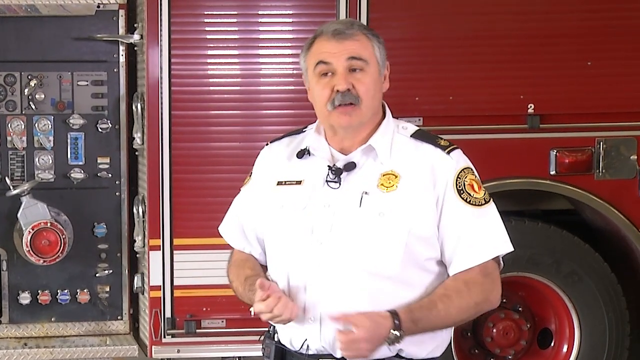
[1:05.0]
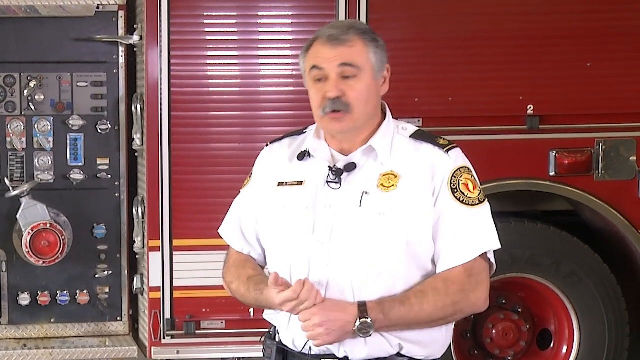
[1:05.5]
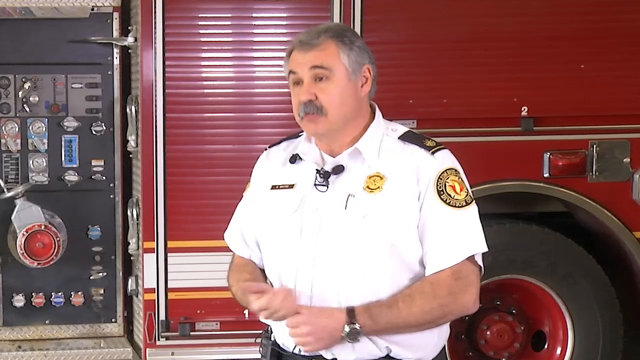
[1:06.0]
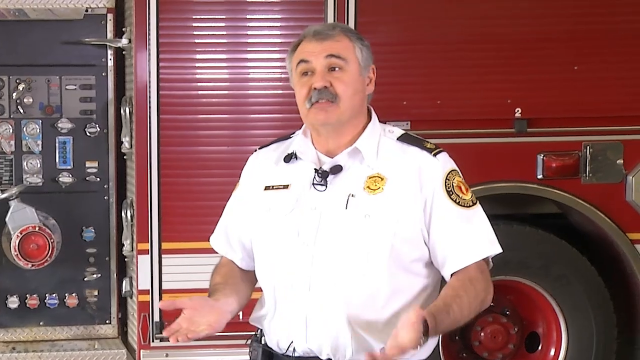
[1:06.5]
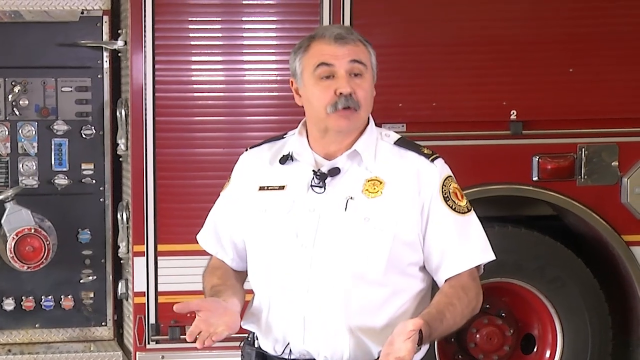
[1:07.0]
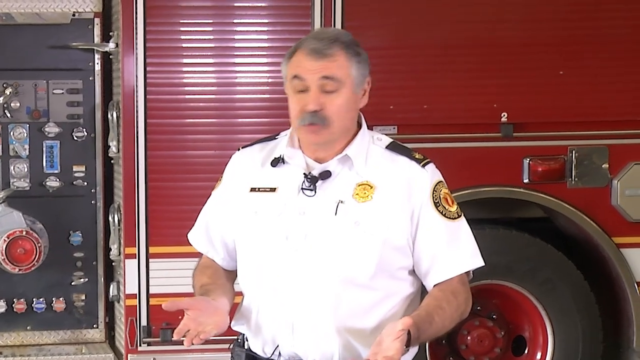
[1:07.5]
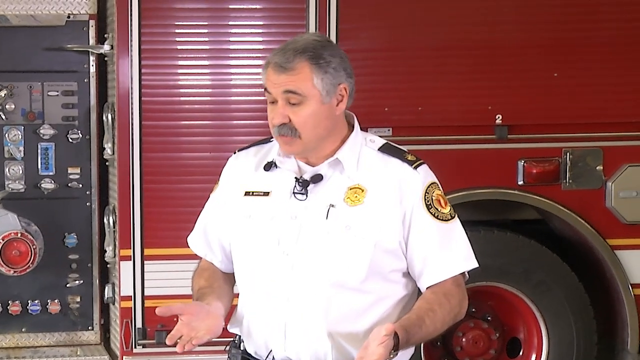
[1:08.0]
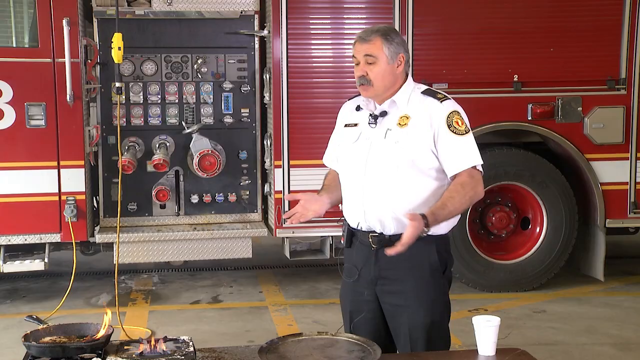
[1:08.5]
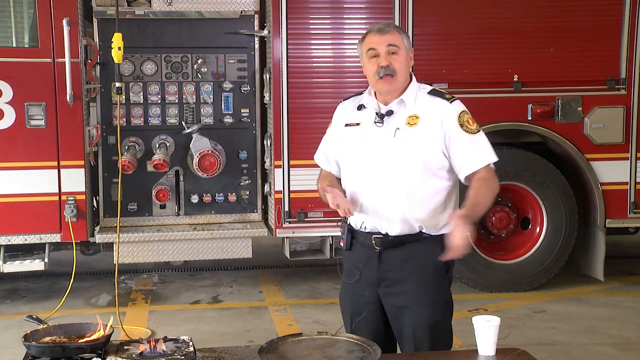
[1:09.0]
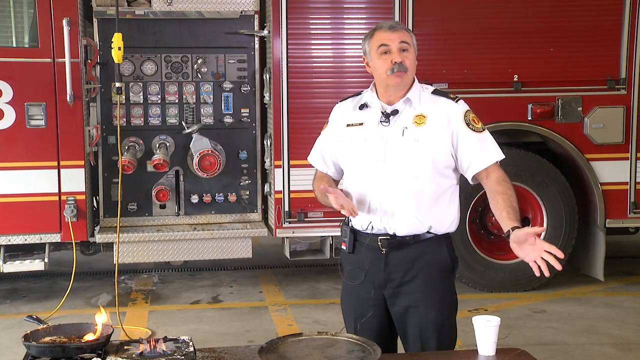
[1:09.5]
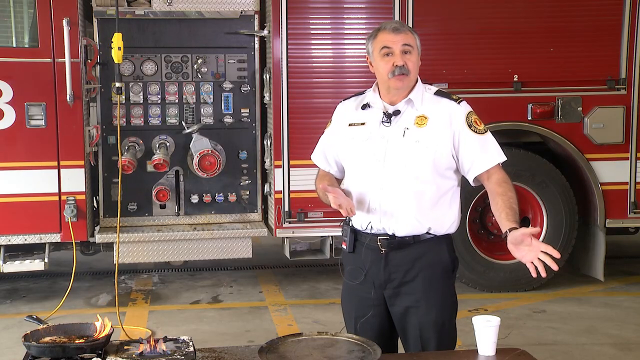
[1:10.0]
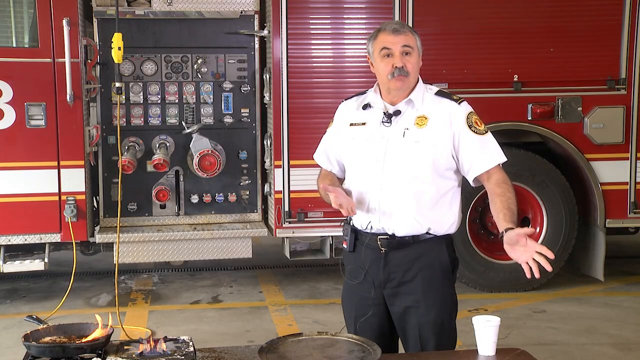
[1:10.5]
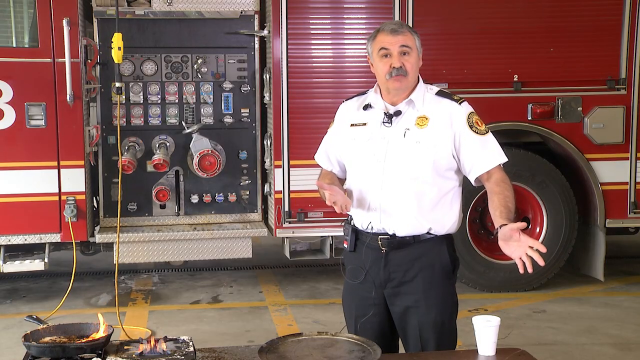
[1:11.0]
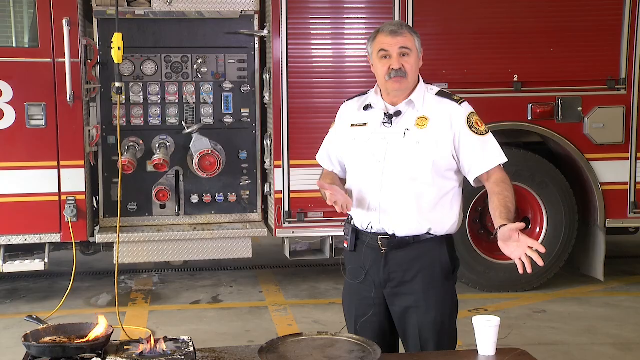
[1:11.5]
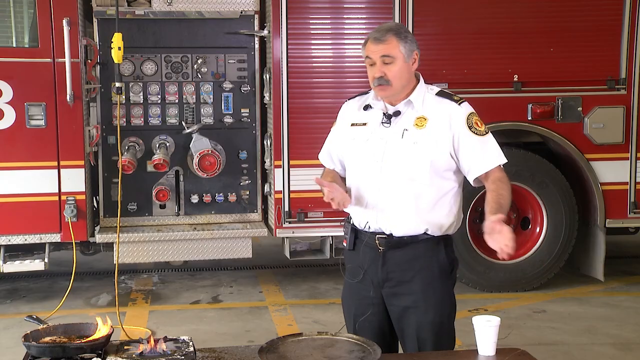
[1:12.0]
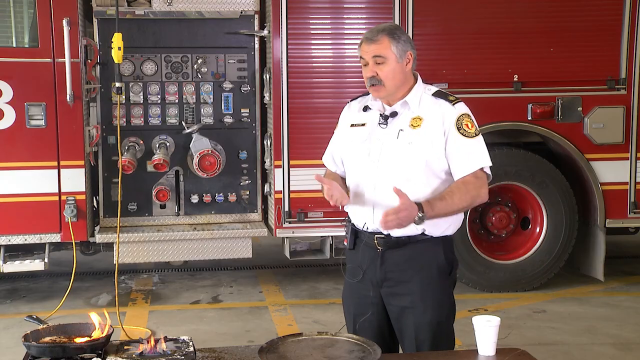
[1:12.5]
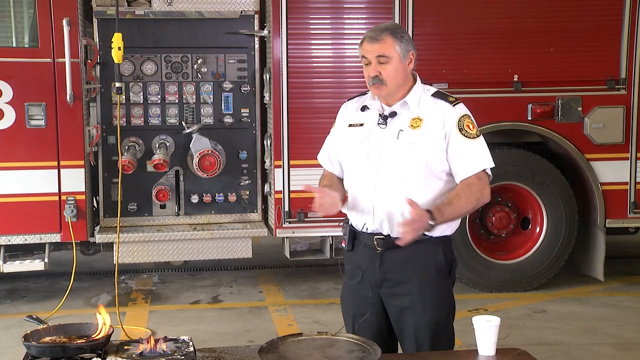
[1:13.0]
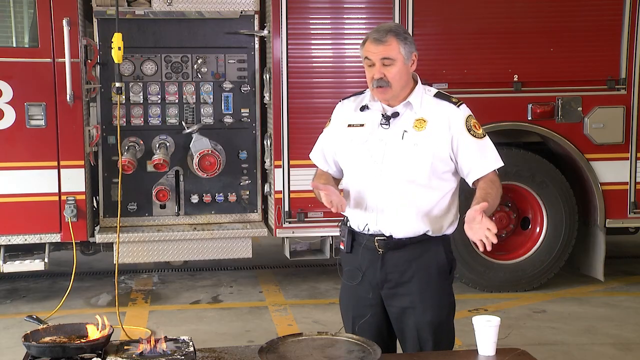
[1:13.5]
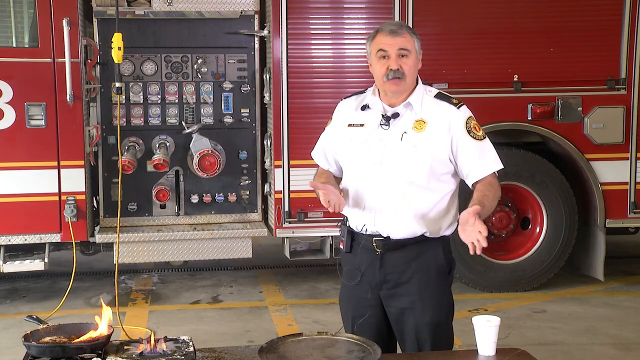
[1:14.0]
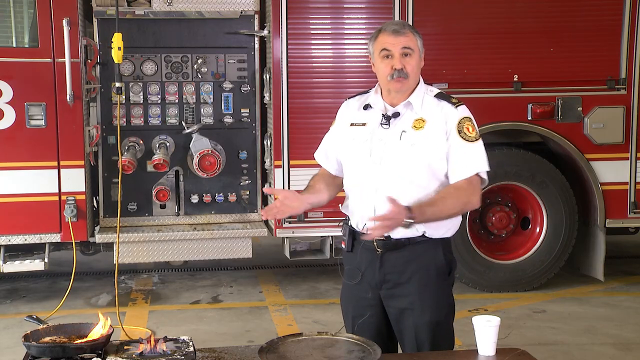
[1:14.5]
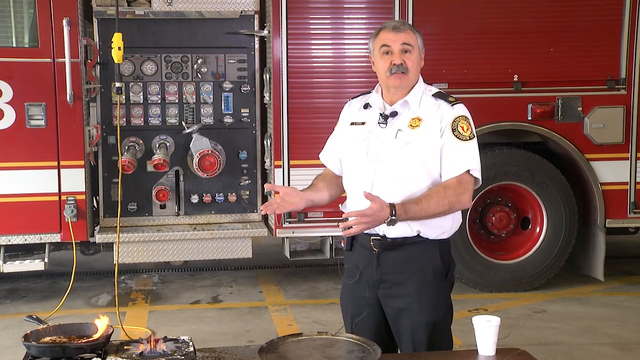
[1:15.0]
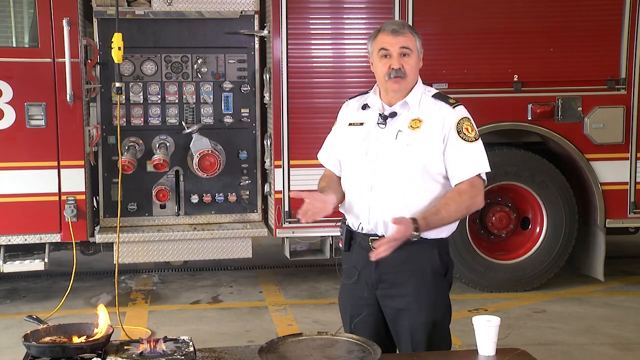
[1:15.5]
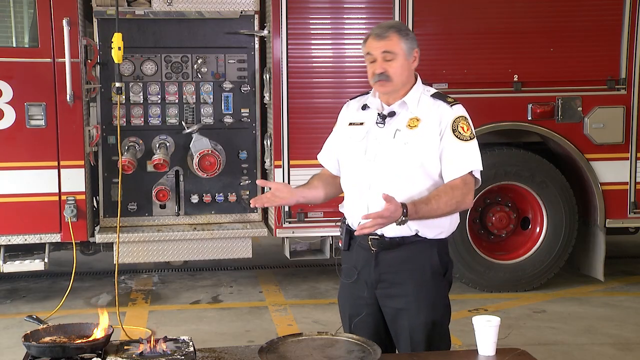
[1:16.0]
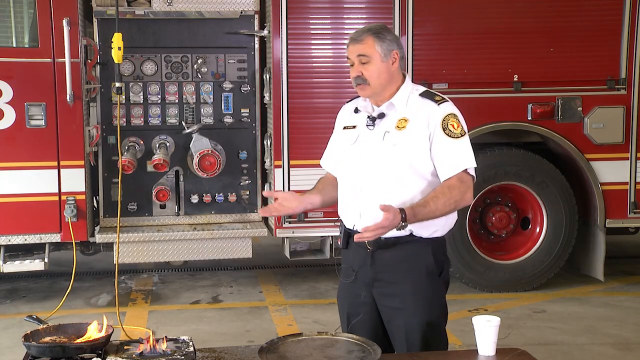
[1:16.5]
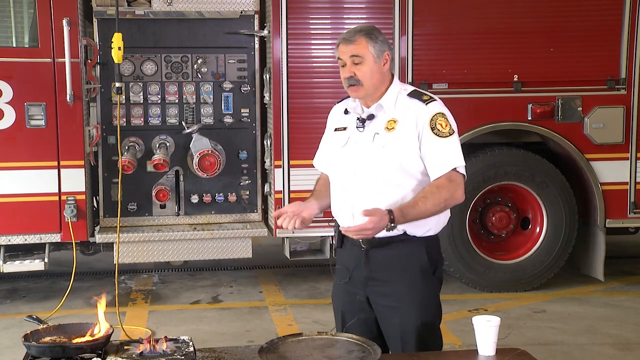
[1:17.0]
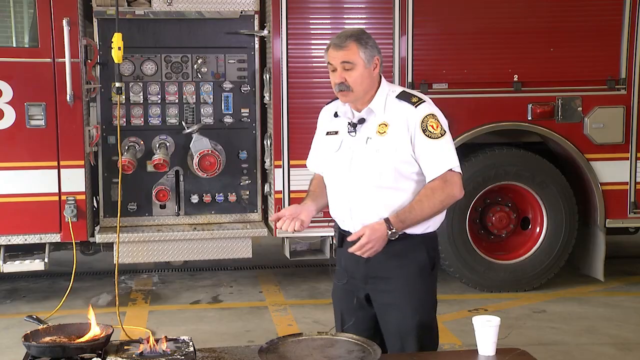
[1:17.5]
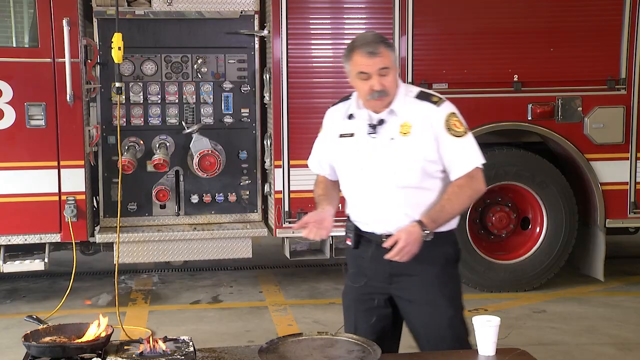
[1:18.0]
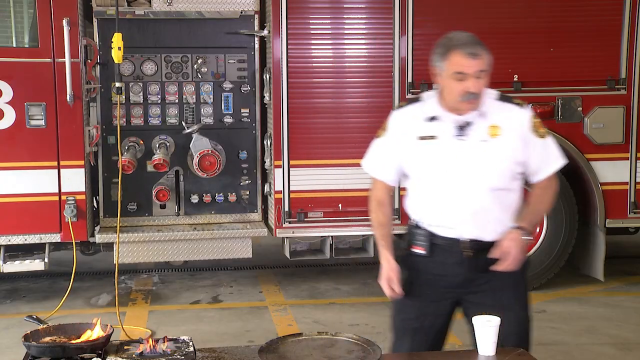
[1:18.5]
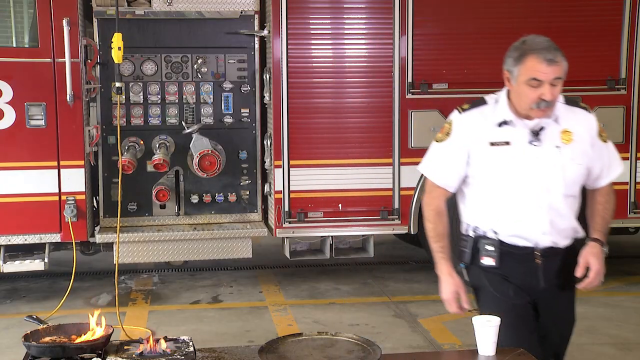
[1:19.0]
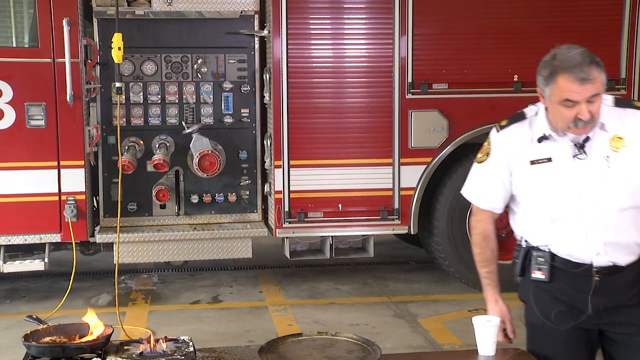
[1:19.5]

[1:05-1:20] The assistant fire chief is speaking again. There is another grease fire inside the pan, a very small one that looks to be on only one half of the pan, with flames reaching maybe four or five inches at most. The pan is still on the left burner, while the right burner is lit and burning. The man stands a bit off to the side, further away than before. The round metal tray, possibly a pizza tray, is off the pan and over toward his side of the table. Another styrofoam cup is in front of him. He approaches the front of the table, and it looks as if he may grab the cup, though it is unclear. He continues speaking and gesturing with his hands.